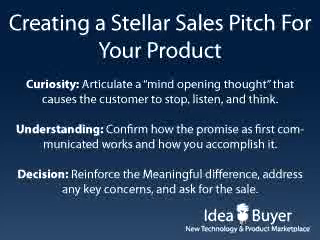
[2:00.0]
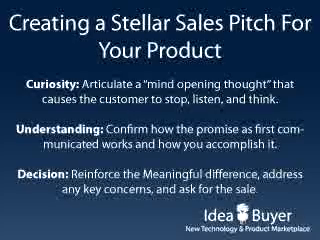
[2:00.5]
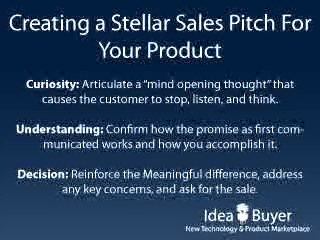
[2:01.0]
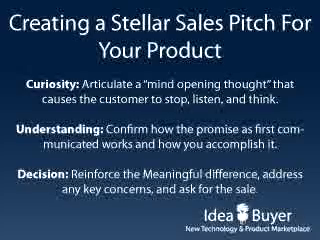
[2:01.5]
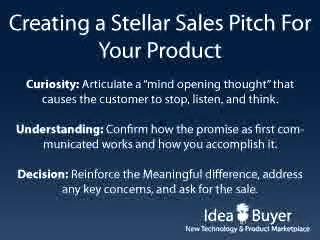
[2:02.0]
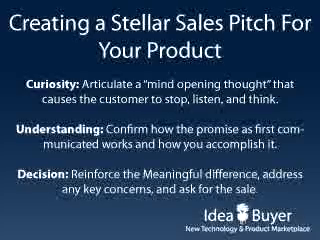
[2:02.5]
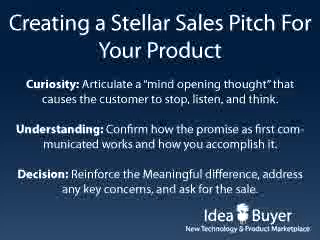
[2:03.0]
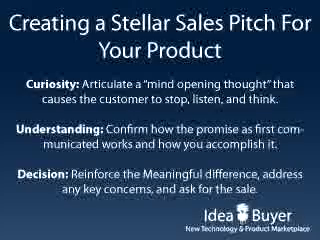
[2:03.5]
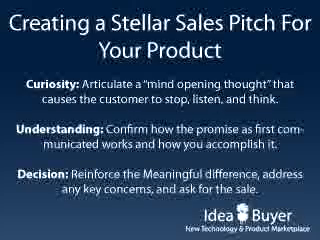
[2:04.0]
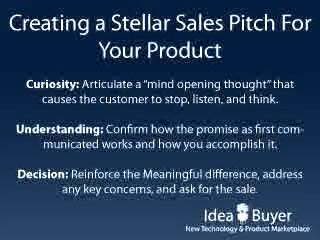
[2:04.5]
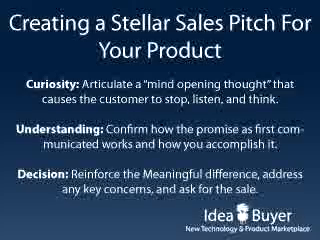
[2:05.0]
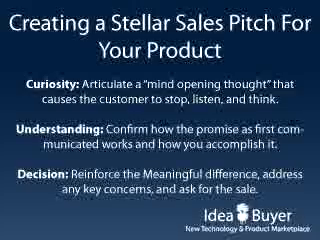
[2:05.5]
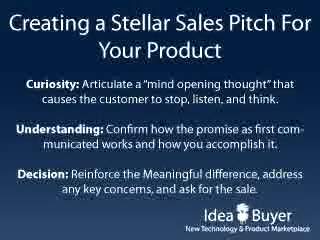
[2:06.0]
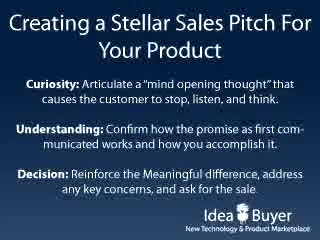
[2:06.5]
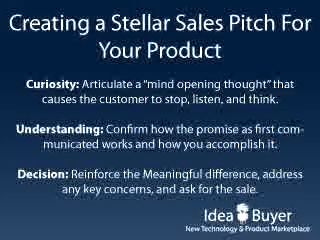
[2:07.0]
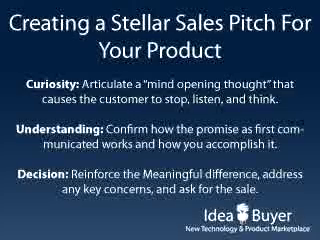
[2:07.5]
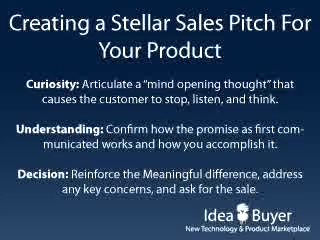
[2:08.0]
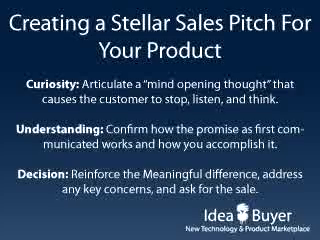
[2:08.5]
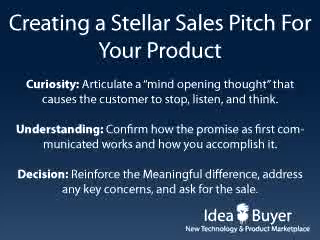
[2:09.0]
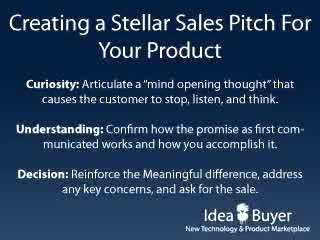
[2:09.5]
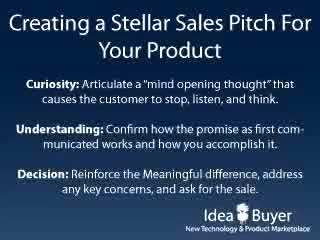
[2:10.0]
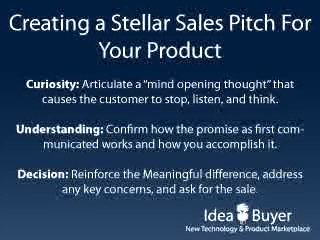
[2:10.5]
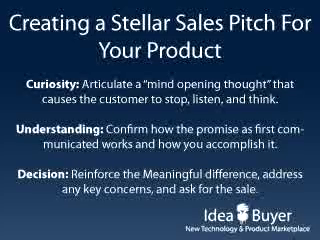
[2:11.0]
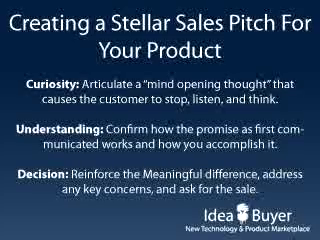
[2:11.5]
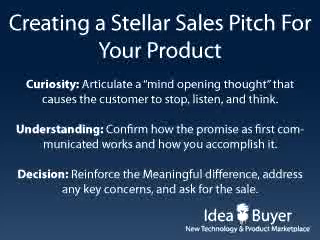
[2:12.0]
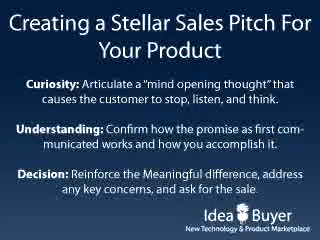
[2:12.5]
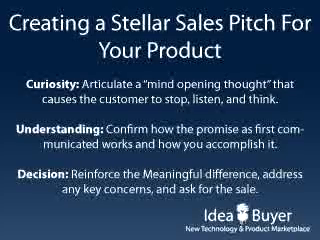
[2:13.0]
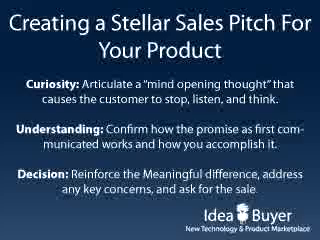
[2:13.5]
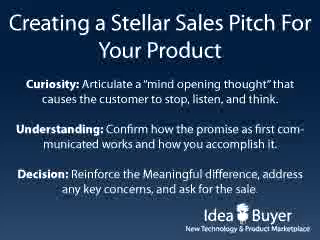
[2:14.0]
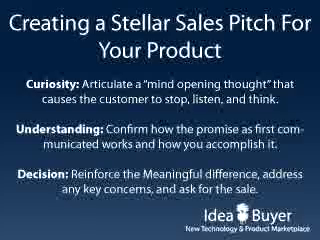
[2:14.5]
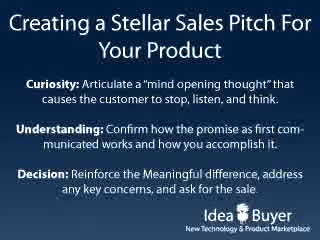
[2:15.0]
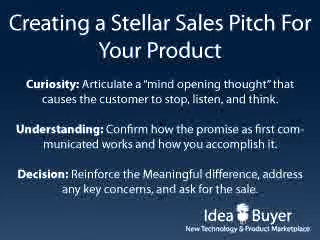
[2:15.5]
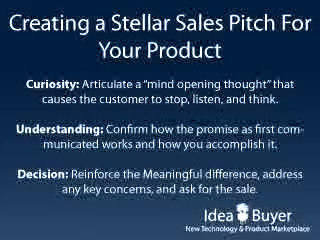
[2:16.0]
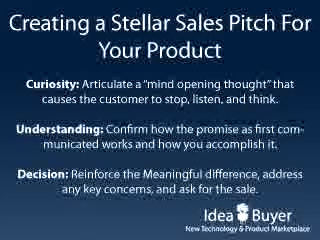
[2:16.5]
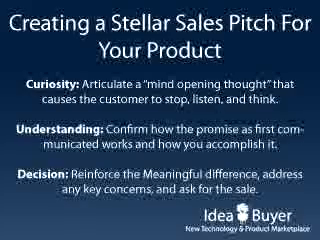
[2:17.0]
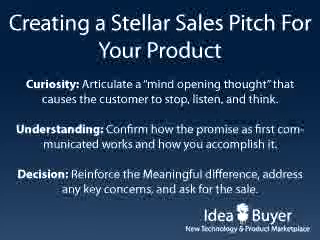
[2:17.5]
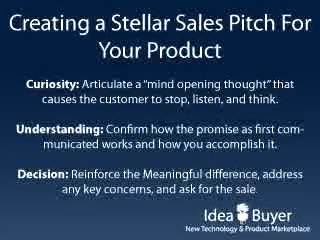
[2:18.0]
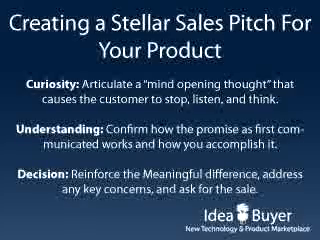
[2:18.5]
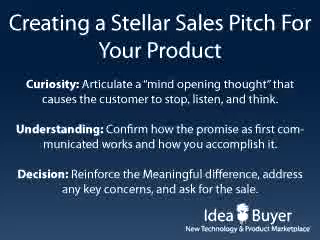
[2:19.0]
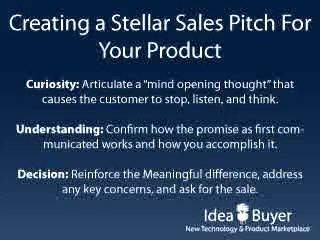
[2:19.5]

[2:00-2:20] The slide about creating a stellar sales pitch for your product remains, with curiosity, understanding and decision points: a mind opening thought that causes the customer to stop, listen and think; confirming how the promise as first communicated works; and reinforcing meaningful difference, addressing key concerns and asking for the sale. "Idea buyer" and "new technology and product marketplace" are shown. There is only one slide, and it does not change.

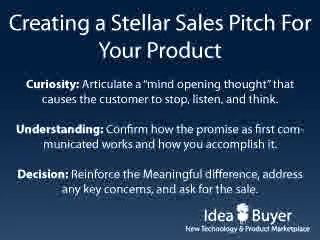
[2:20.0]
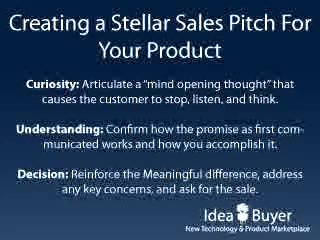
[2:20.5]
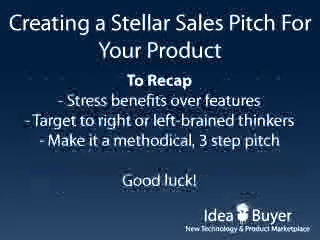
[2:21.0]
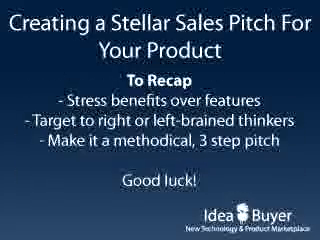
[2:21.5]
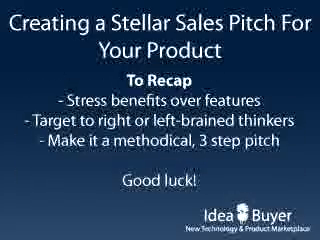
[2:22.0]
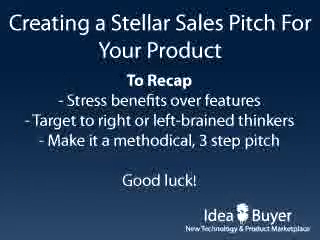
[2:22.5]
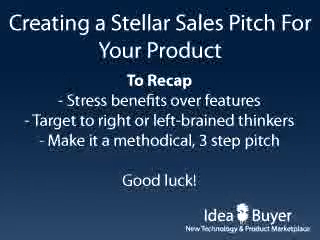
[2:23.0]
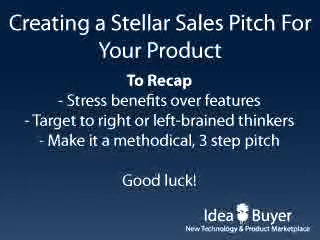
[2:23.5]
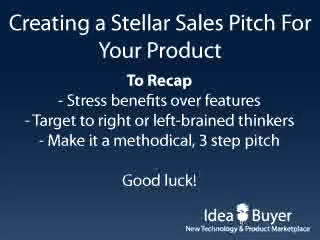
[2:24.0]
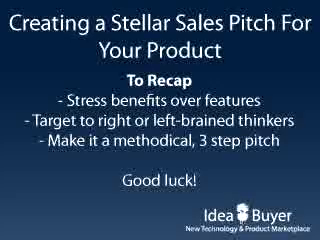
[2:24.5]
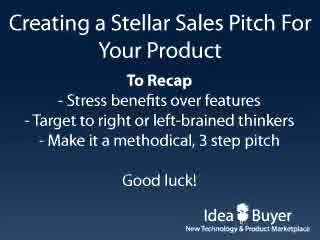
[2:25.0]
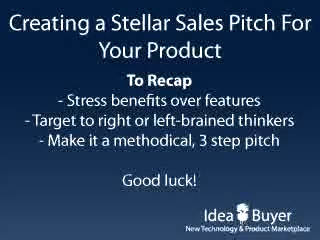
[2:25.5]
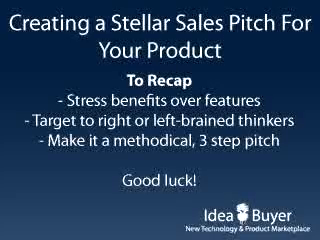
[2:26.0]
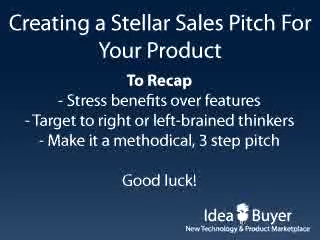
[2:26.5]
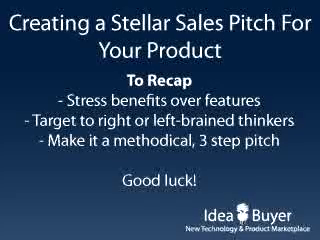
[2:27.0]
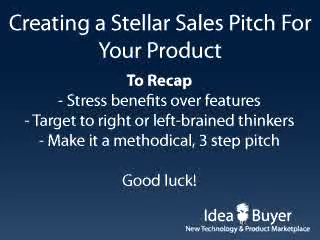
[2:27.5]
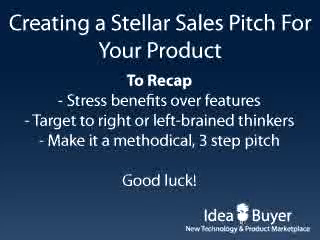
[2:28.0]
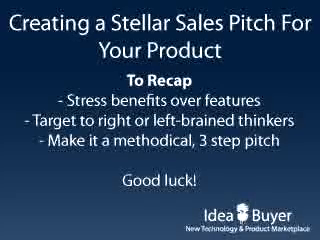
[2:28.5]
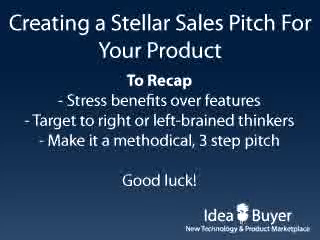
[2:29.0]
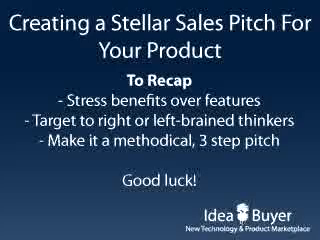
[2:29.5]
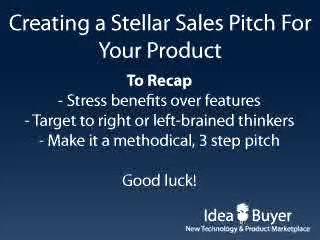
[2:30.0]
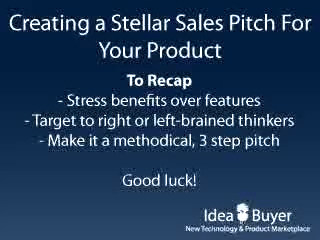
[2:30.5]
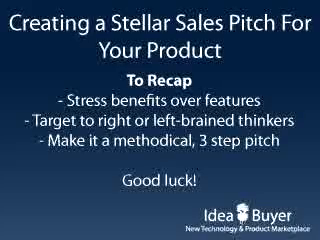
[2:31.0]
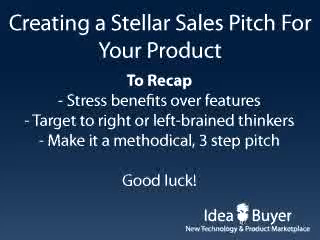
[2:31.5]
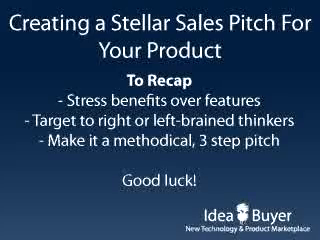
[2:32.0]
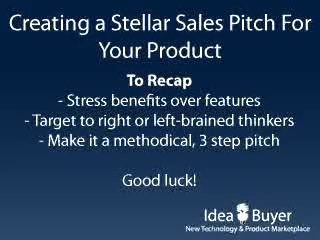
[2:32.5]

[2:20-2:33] A final slide reads "create a stellar sales pitch for product" and, "to recap," lists "stress benefits over features," "target to right or left brain thinkers," and "make it methodical," mentioning a three-step pitch. It says "good luck" with idea buyer. The background is blue with white lettering, the top text in a bigger font than the lower text.